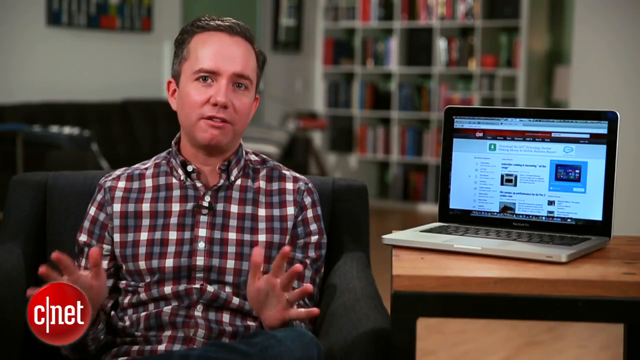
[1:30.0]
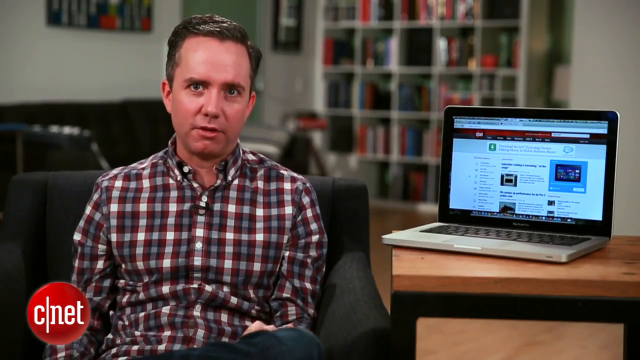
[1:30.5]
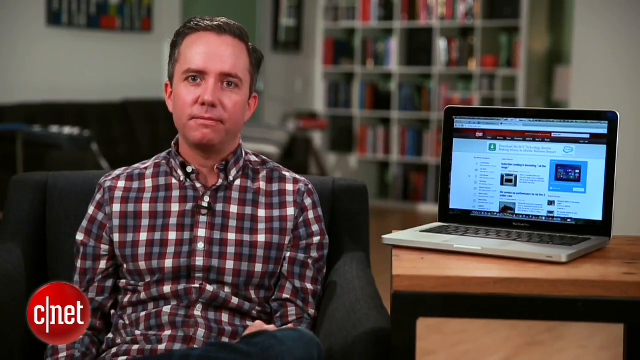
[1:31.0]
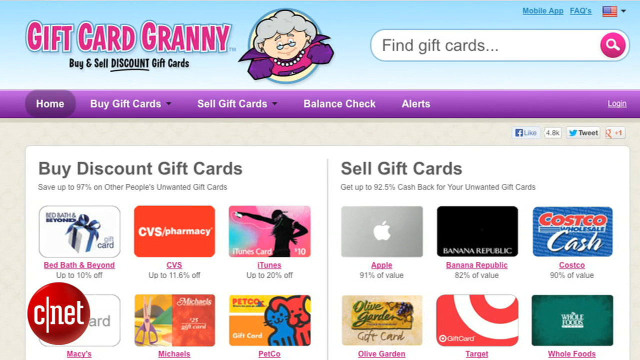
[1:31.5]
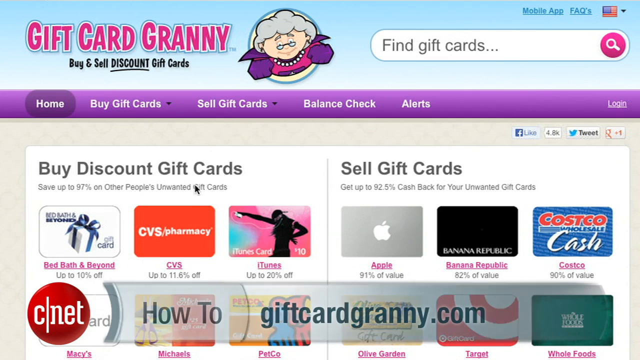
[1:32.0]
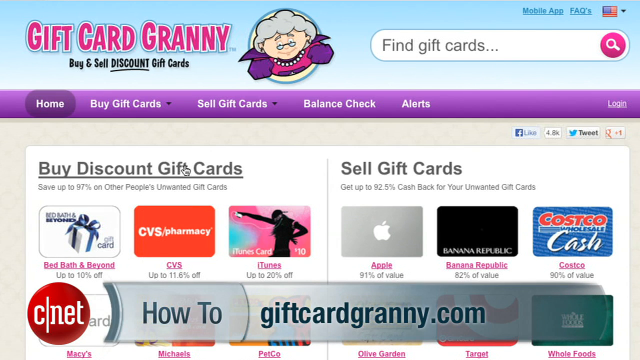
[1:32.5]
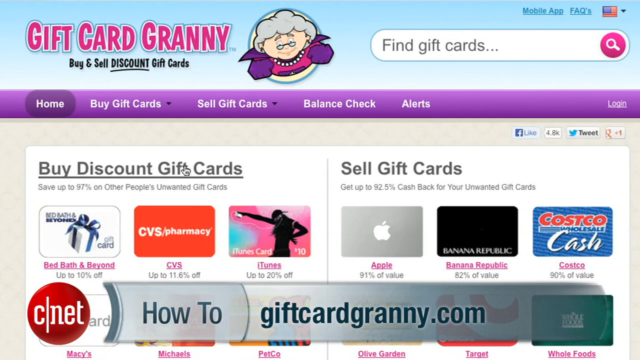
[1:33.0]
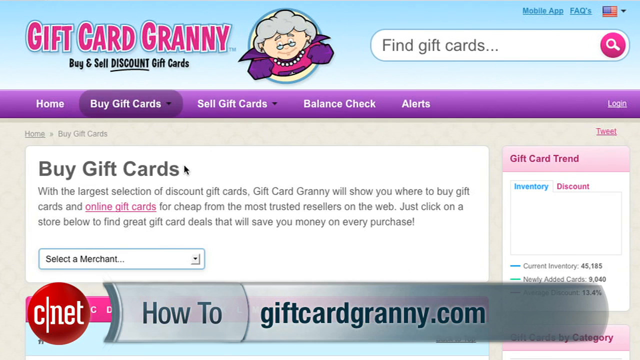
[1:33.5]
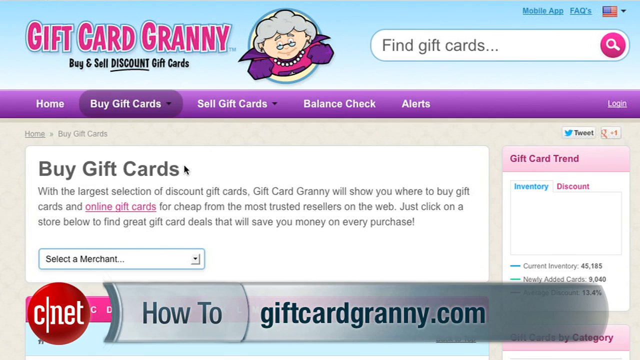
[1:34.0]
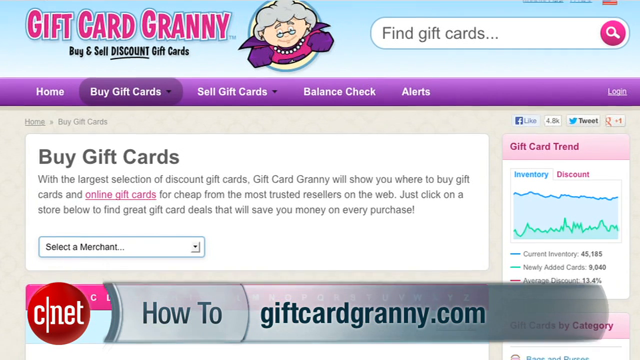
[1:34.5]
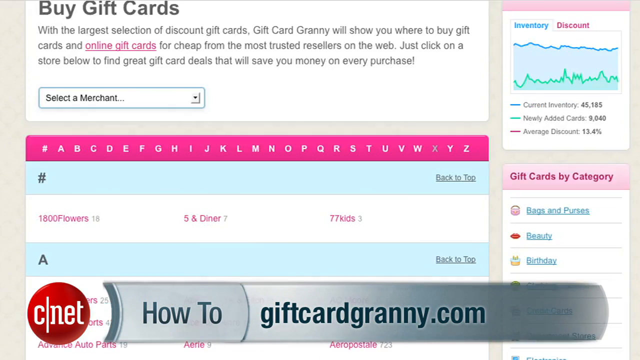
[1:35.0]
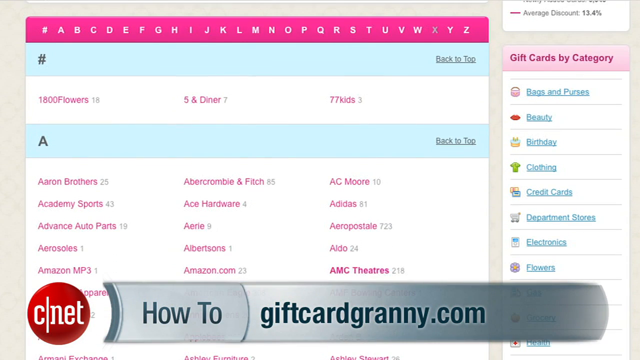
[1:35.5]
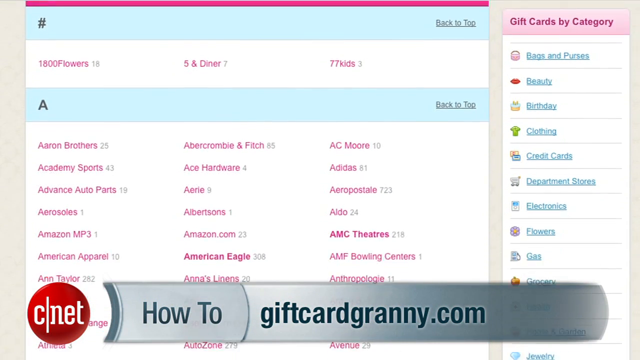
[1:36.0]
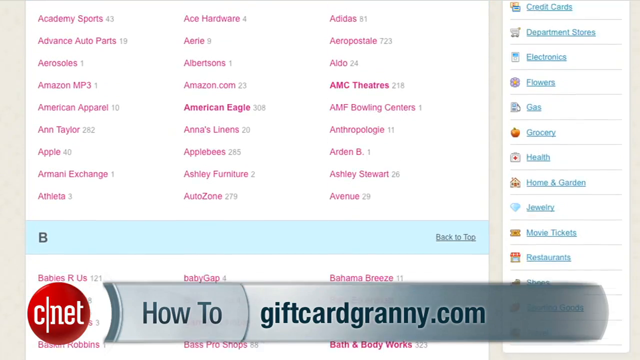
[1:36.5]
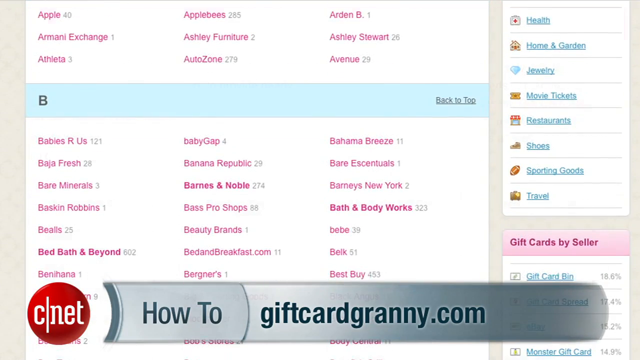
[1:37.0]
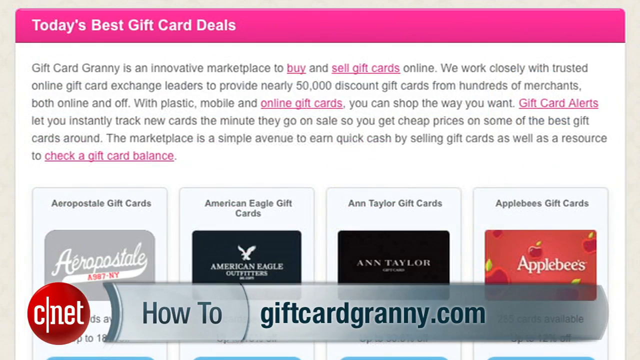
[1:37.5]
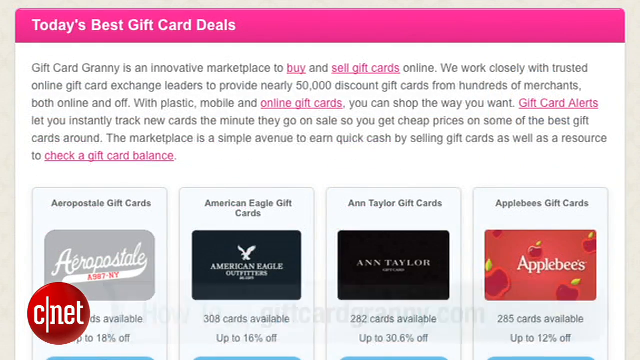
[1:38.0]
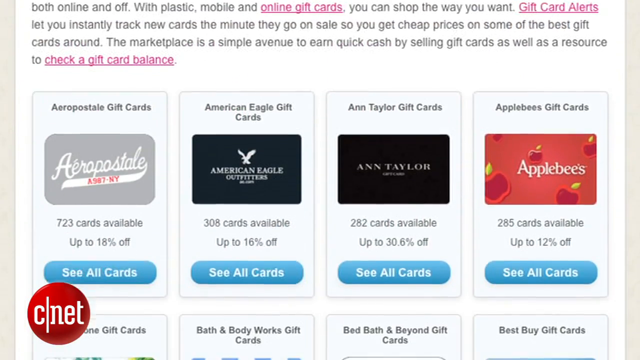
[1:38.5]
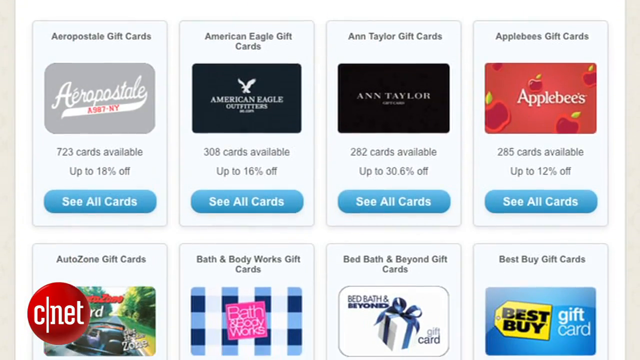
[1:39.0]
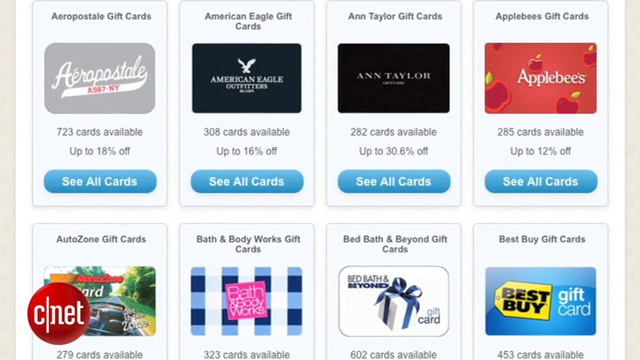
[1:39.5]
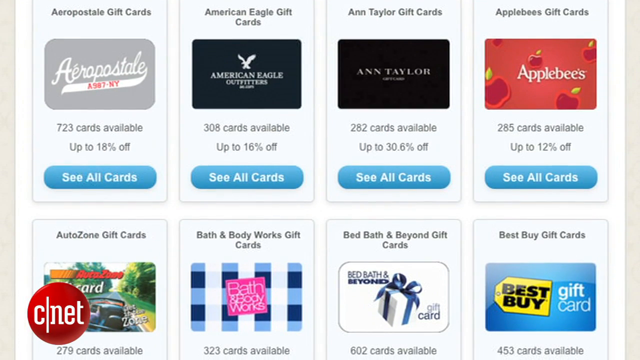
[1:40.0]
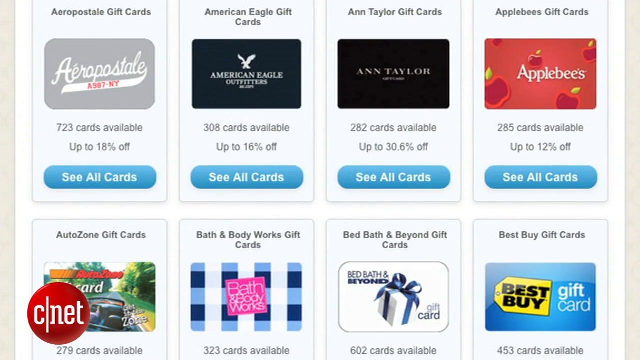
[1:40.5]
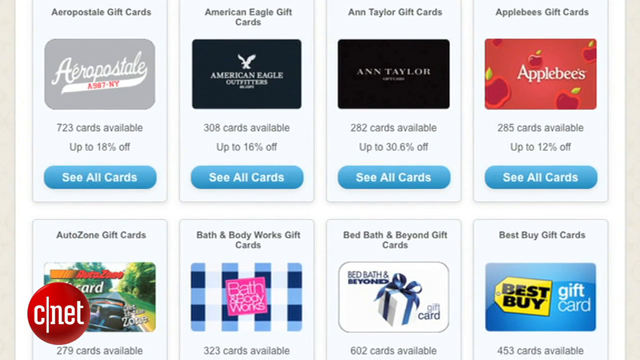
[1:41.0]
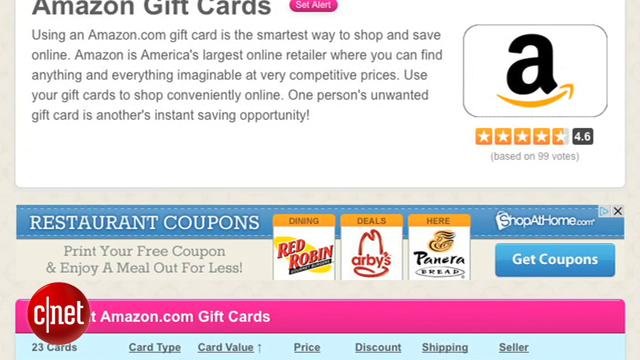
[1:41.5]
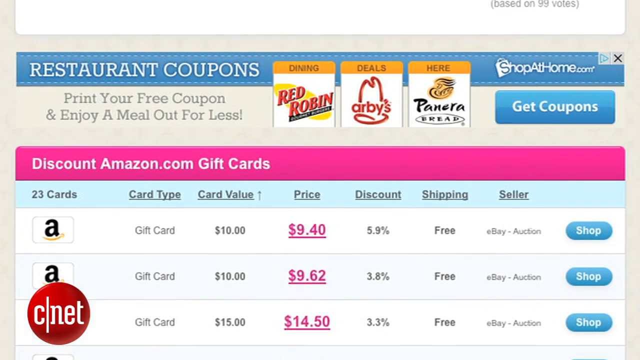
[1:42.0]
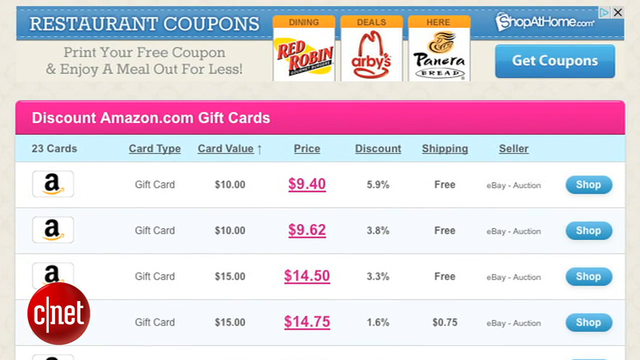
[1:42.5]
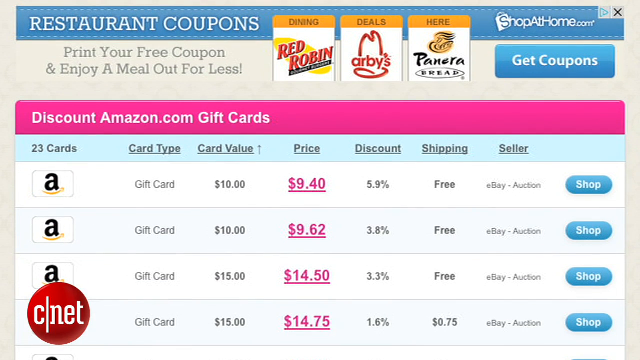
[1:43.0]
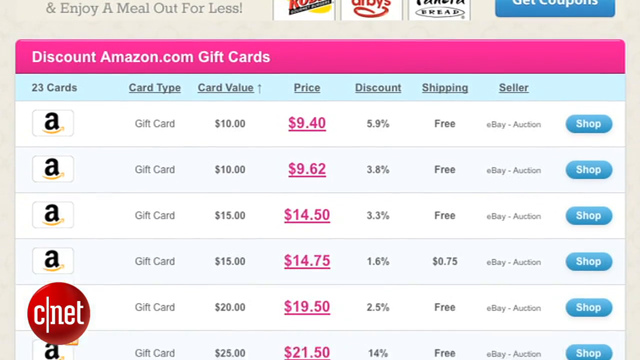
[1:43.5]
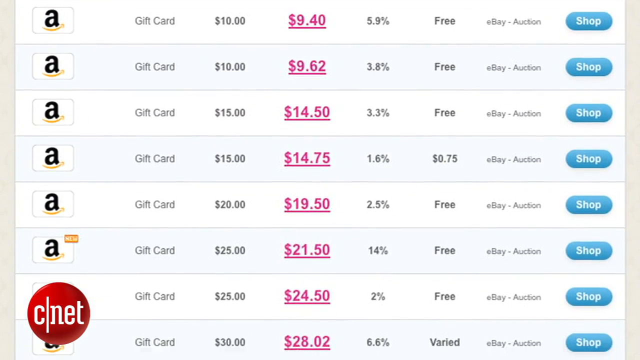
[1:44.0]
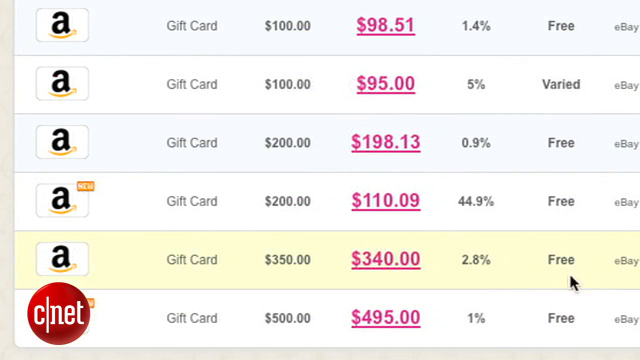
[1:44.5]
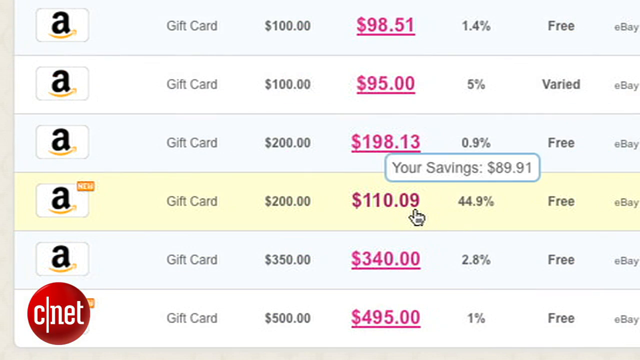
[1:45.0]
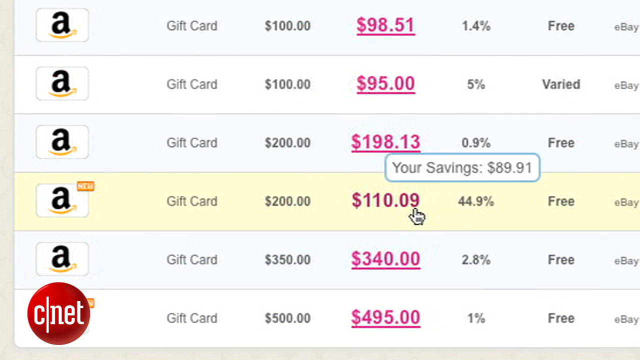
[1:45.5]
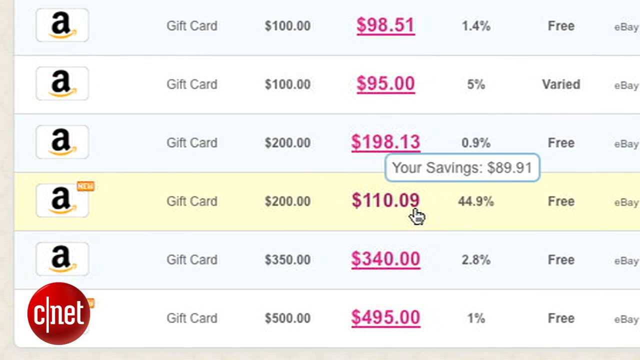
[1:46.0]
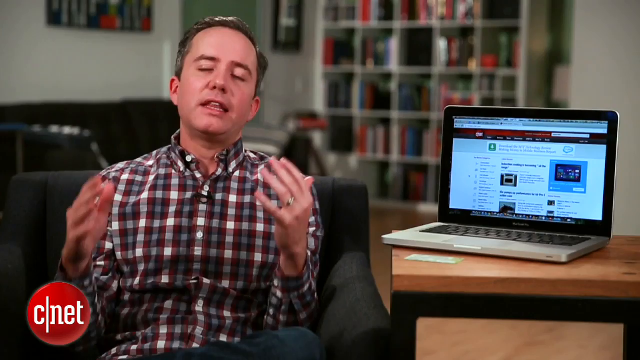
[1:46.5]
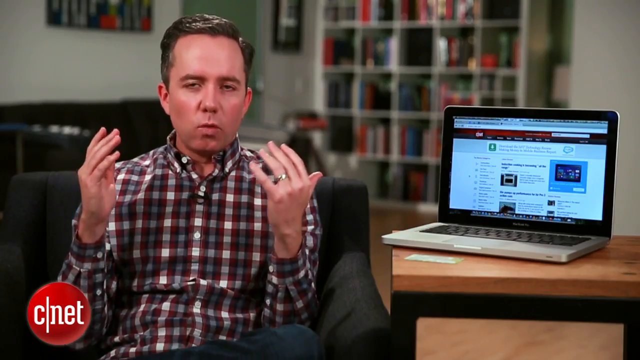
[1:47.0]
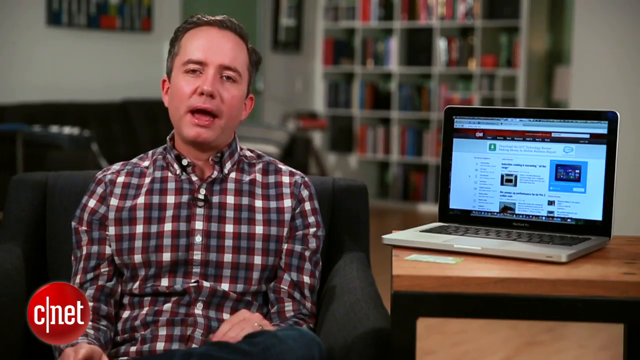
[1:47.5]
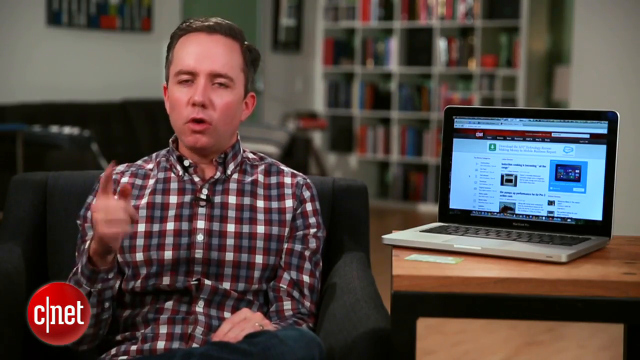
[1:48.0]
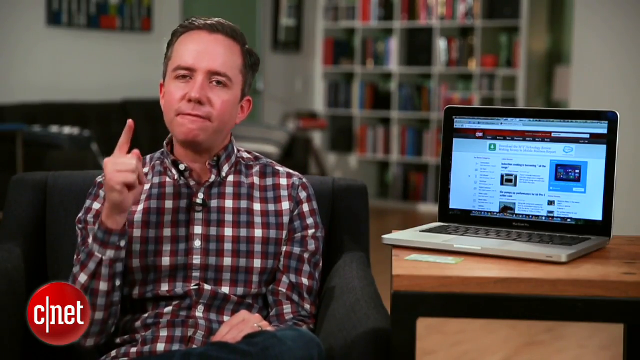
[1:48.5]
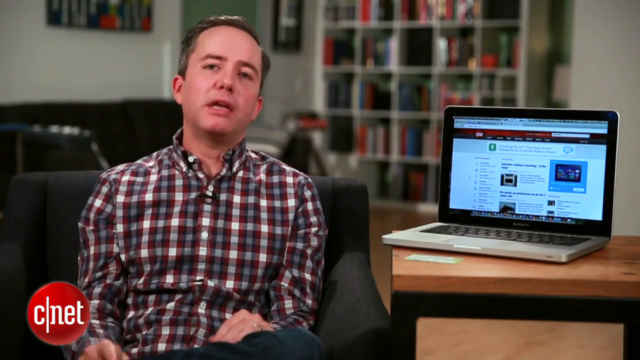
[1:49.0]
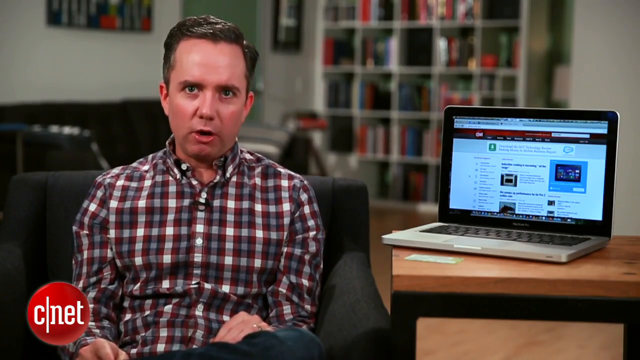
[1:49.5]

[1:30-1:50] The editor continues to speak as a website called Gift Card Granny is shown, with a logo of a granny at the top and the promo banner "Buy and sell discount gift cards." Many types of gift cards are listed, including Amazon, restaurant coupons, Applebee's, CBS, Costco, Ace Hardware, Baby Gap, Best Buy, Bath & Body Works, Bed Bath & Beyond, Red Robin, and Arby's. The video then goes back to the editor in his residential setting.